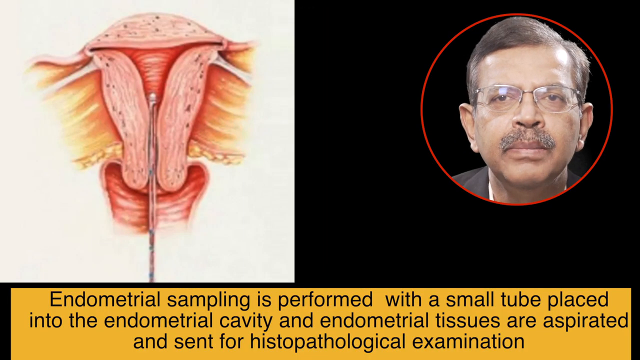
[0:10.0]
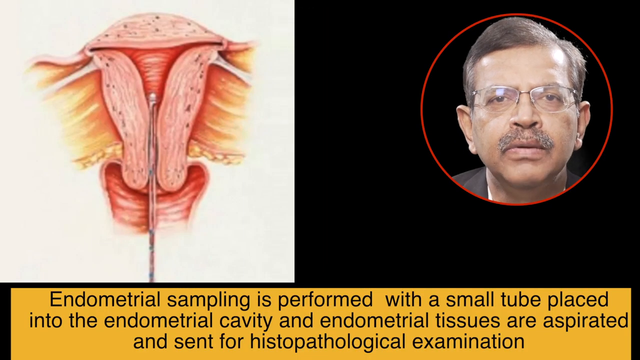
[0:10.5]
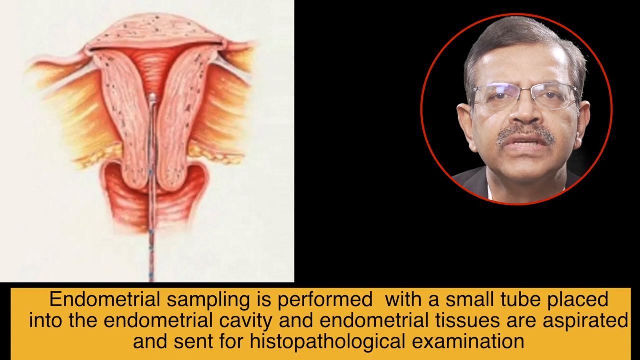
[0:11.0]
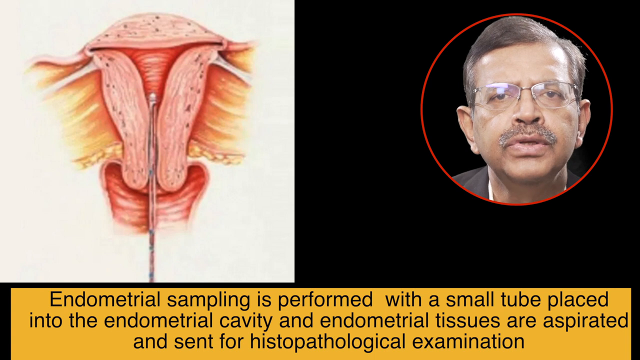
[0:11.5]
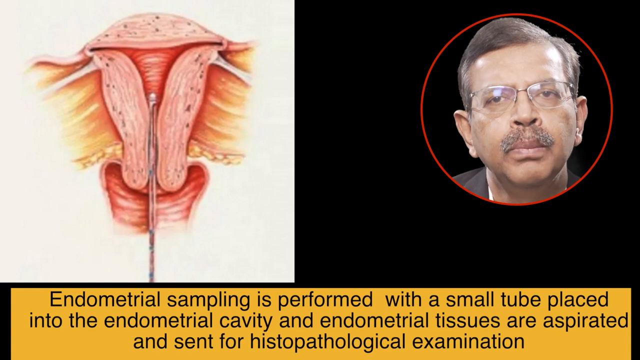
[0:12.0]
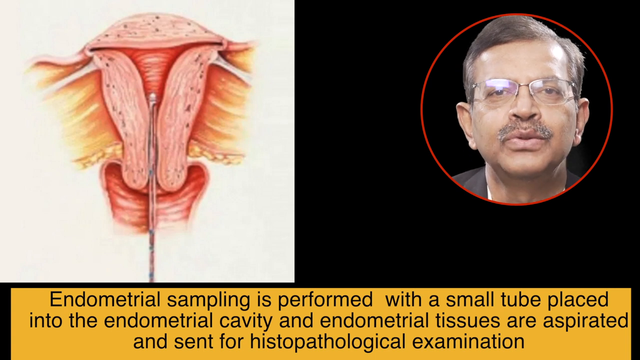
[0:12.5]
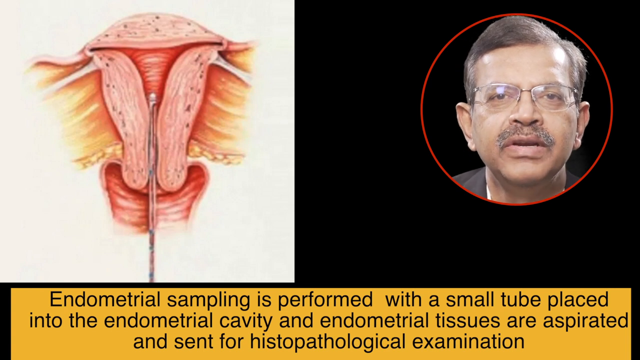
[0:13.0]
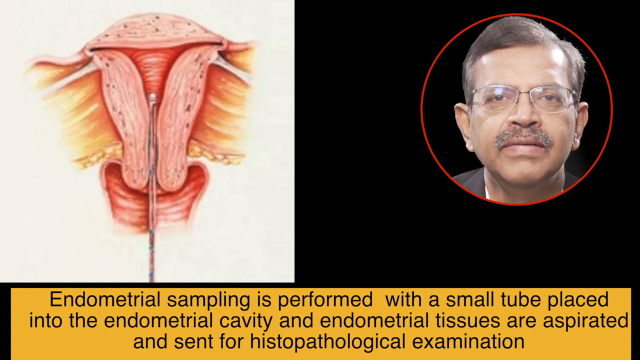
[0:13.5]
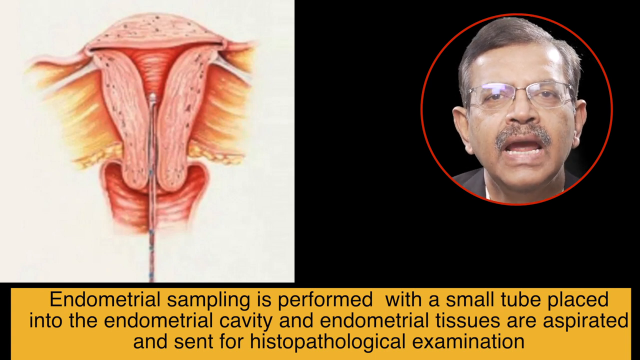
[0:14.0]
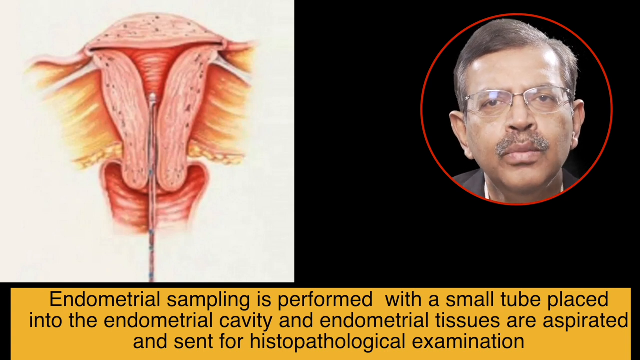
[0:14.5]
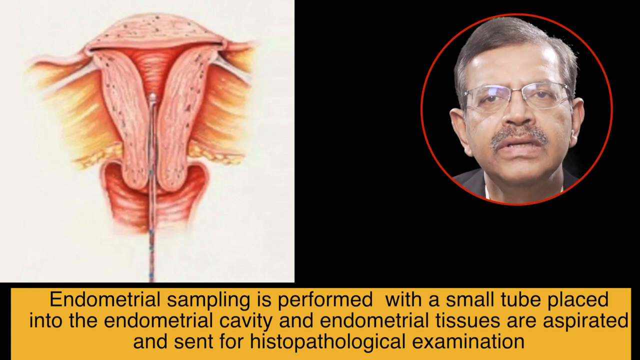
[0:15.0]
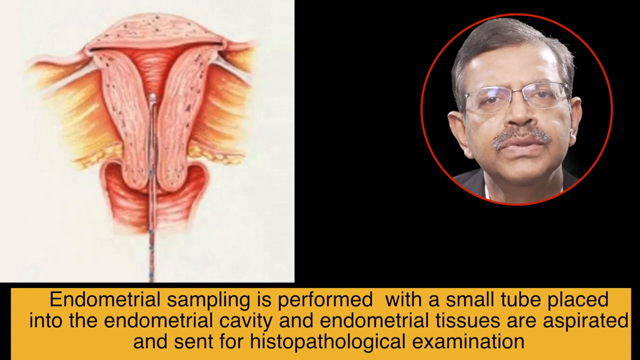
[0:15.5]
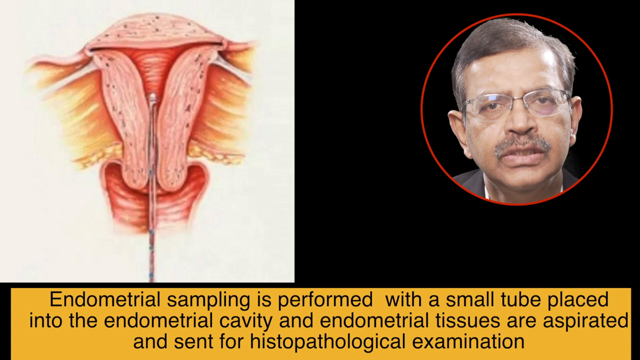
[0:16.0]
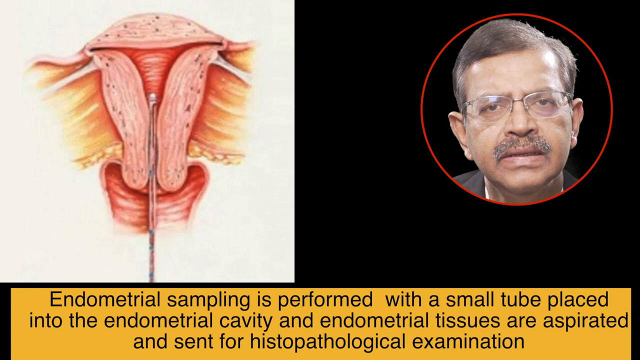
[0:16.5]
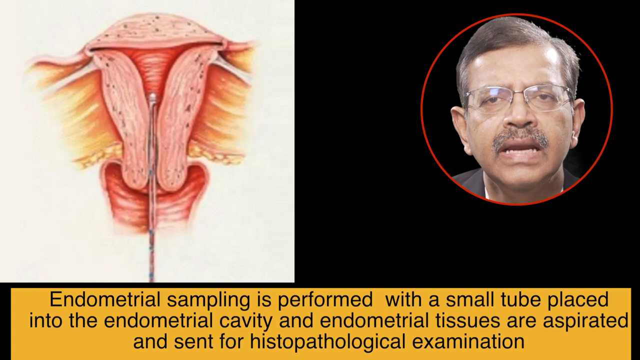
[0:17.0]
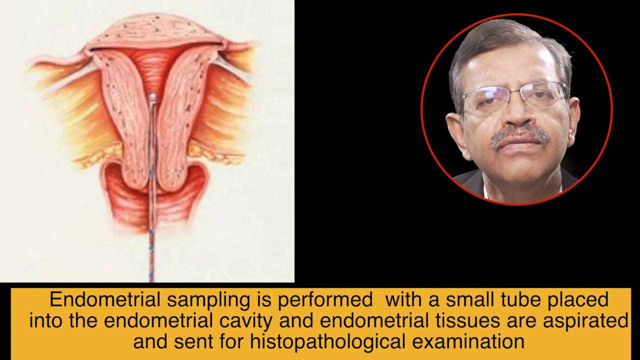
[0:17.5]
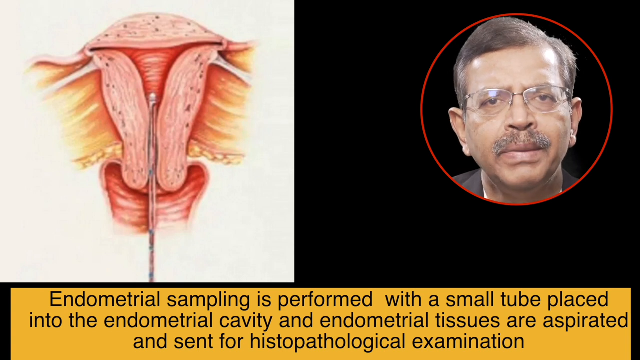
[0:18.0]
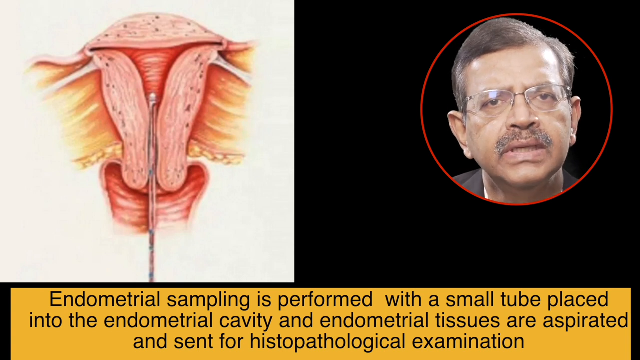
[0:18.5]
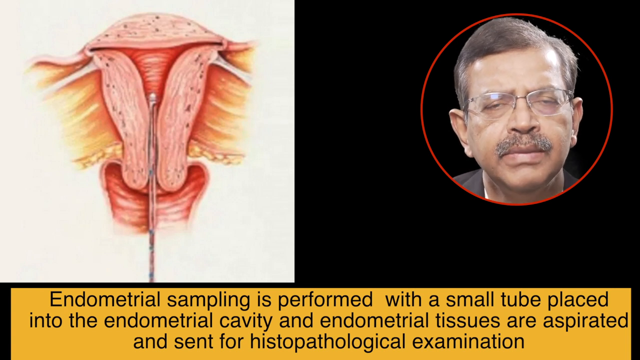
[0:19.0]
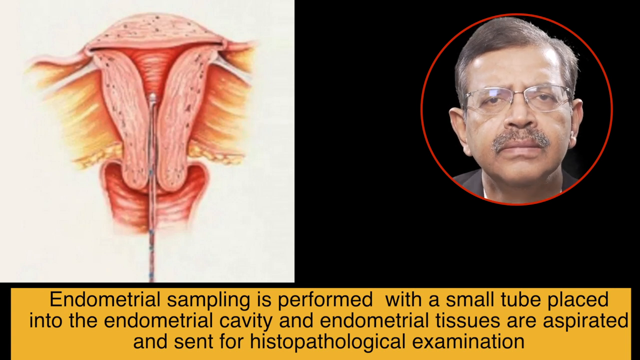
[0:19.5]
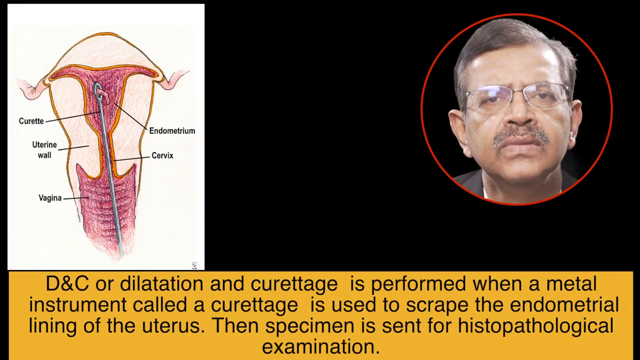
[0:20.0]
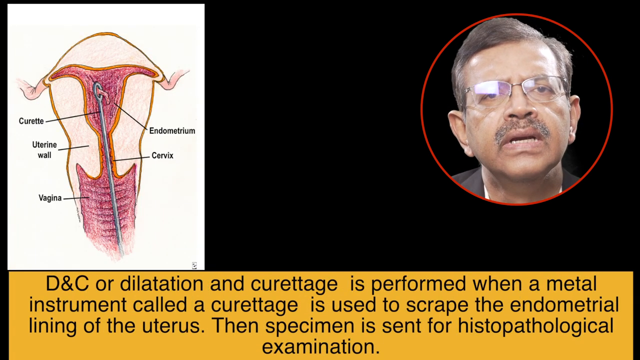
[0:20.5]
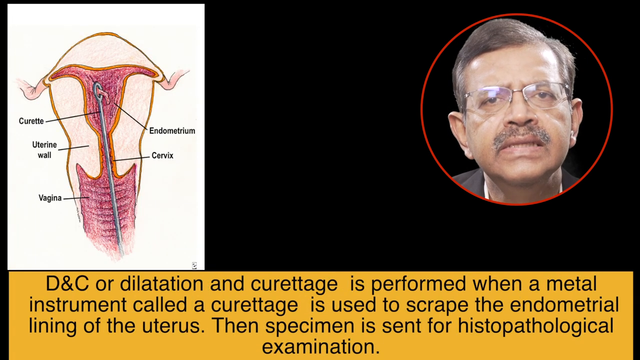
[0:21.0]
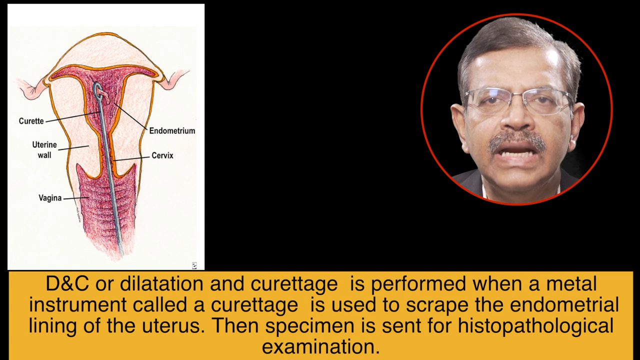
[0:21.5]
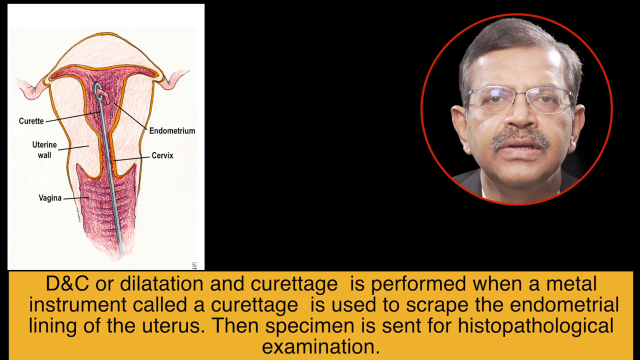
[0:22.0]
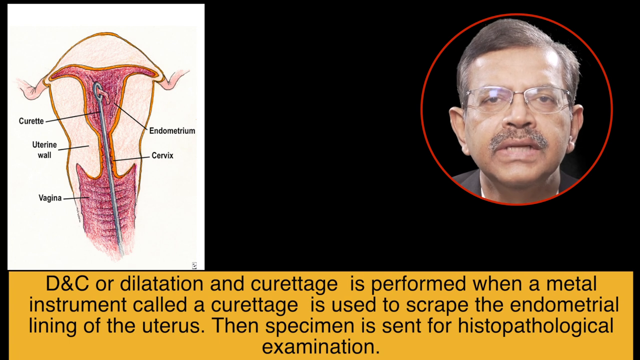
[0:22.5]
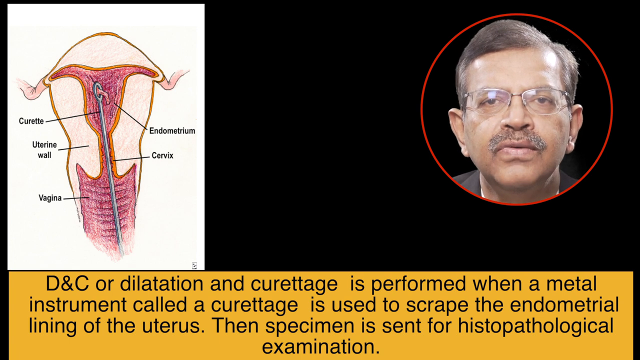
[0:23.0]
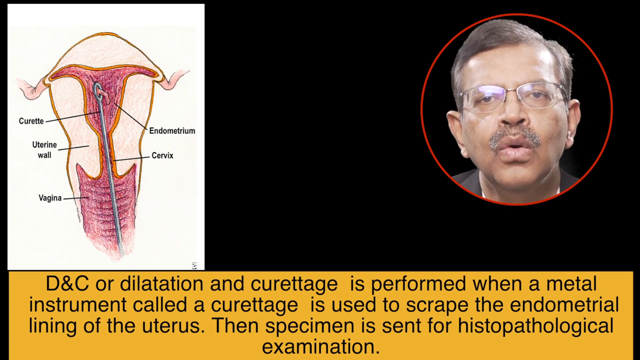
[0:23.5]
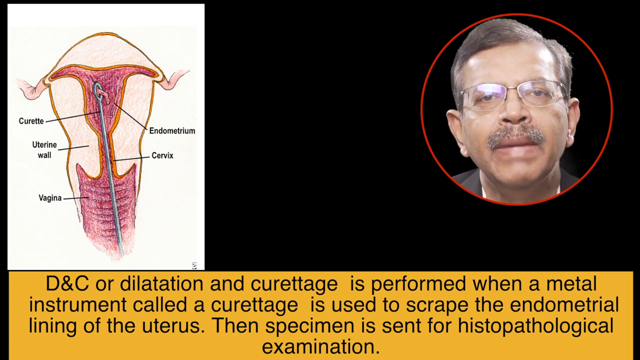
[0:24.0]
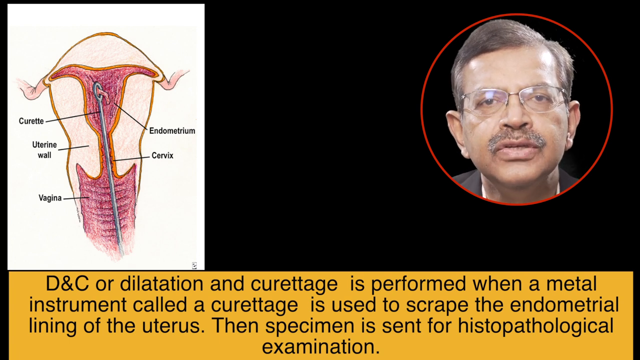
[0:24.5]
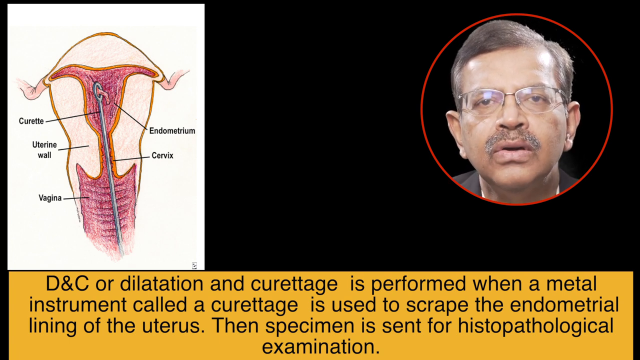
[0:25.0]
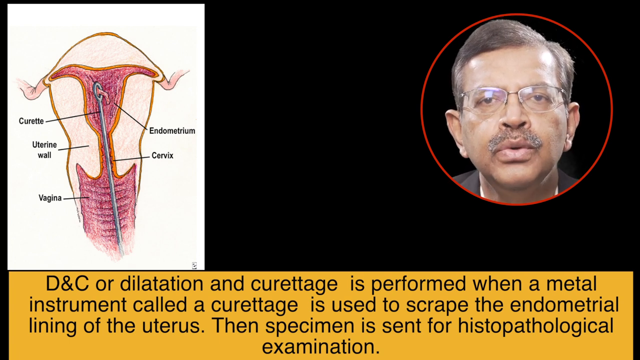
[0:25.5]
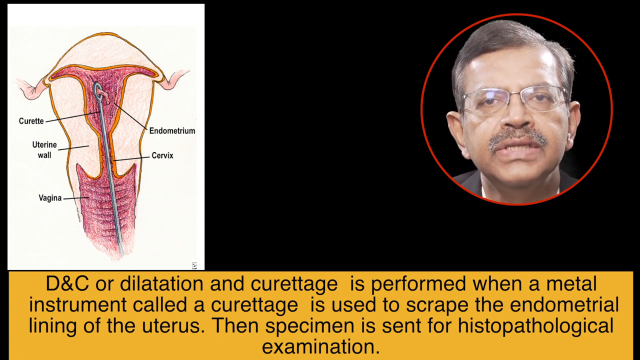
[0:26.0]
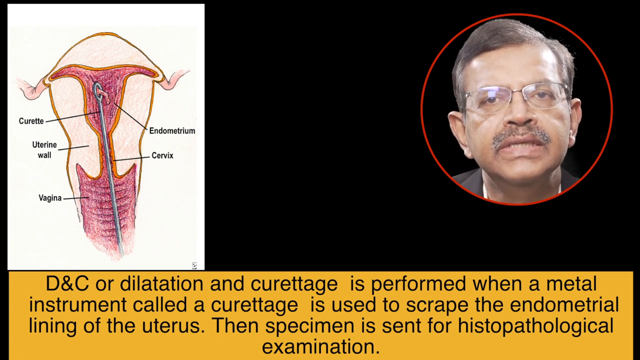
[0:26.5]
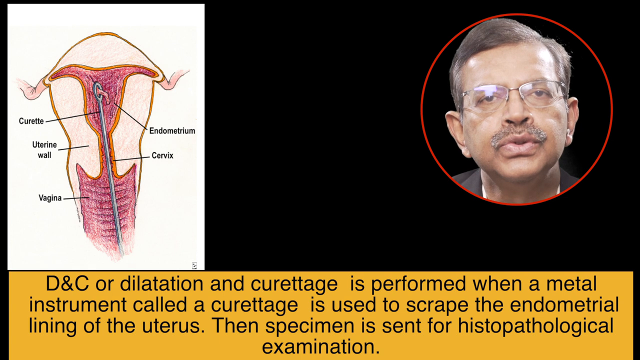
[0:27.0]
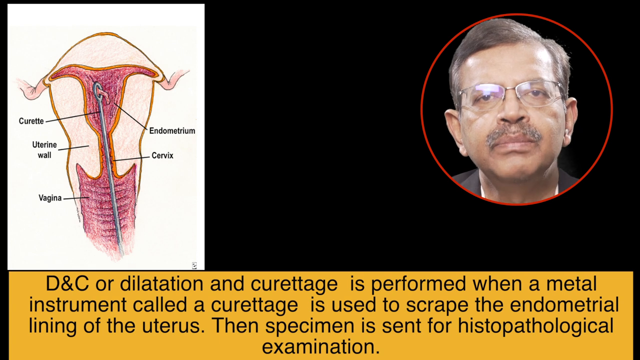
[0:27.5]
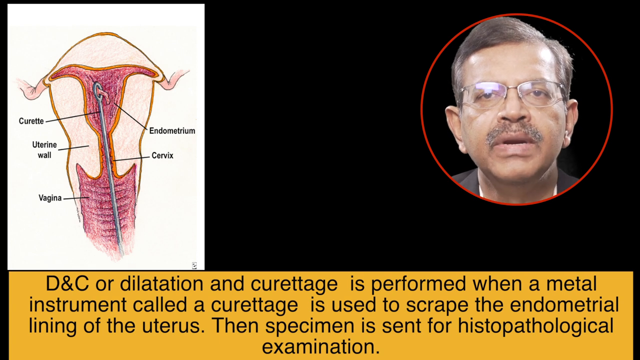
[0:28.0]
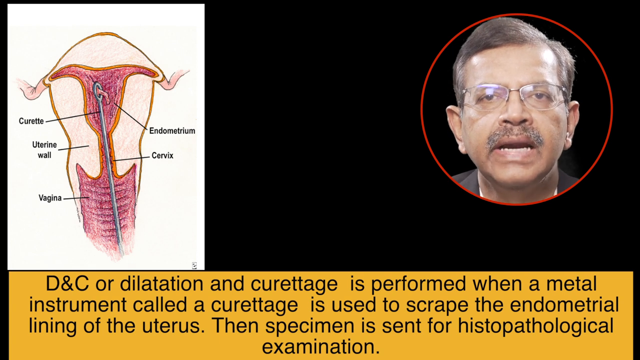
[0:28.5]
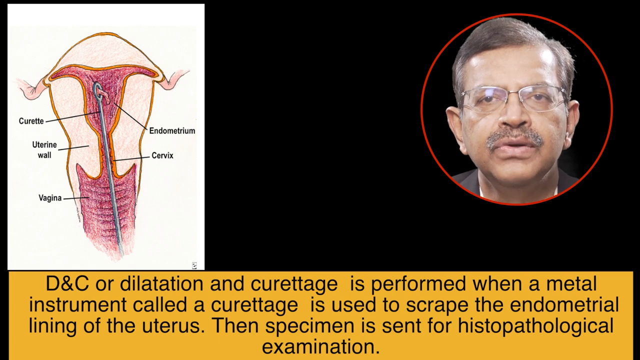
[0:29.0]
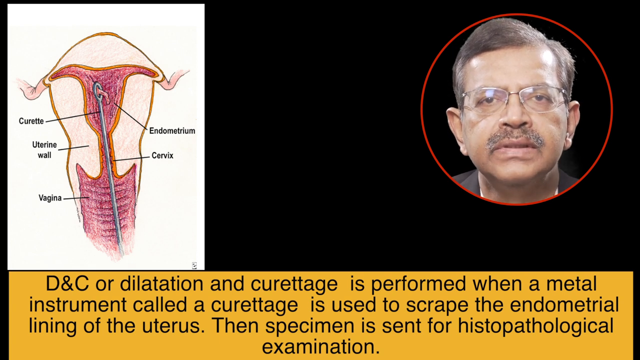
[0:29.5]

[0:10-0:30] The subtitle reads "endometrial sampling is performed with a small tube placed into the endometrial cavity and endometrial tissues are aspirated and sent for histopathological examination". While it is shown, a diagram of the uterus appears on the left, and on the right the man's face is inside a thin red circle. The next subtitle reads "D&C or dilation and curettage is performed when a metal instrument called a curettage is used to scrape the endometrial lining of the uterus. Then specimen is sent for histopathological examination." The diagram at the top left now shows a uterus with a metal instrument scraping the lining, while the man speaks at the top right inside the circle. Inside the circle he has a black background, a red circle surrounds him, and around that is a black background. He is presumably narrating what the subtitles say.